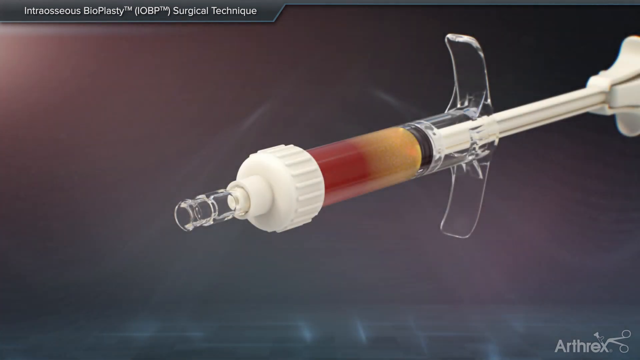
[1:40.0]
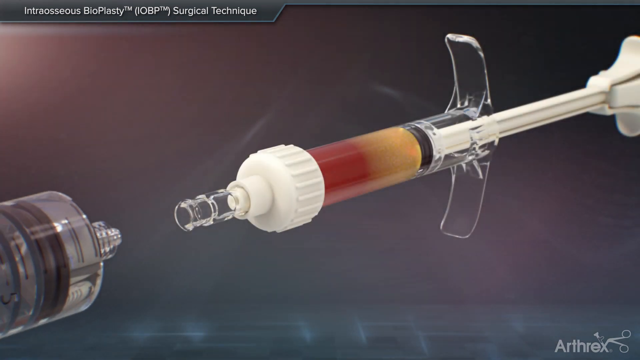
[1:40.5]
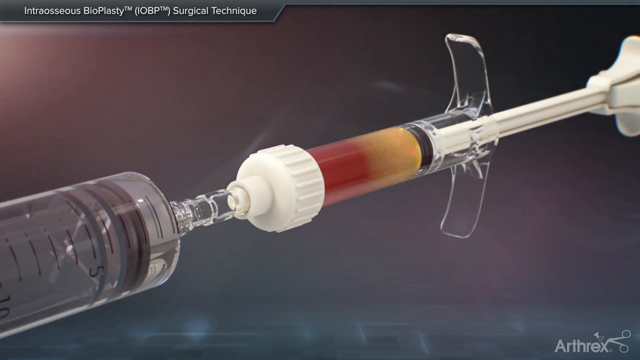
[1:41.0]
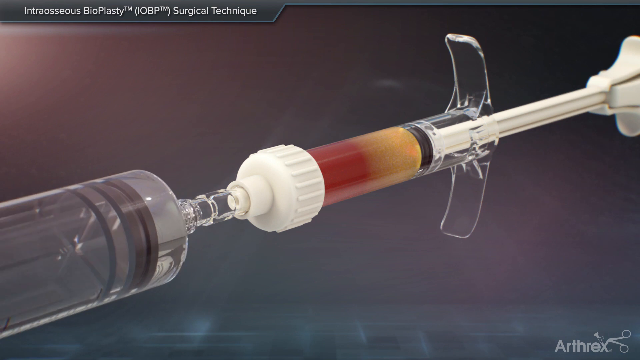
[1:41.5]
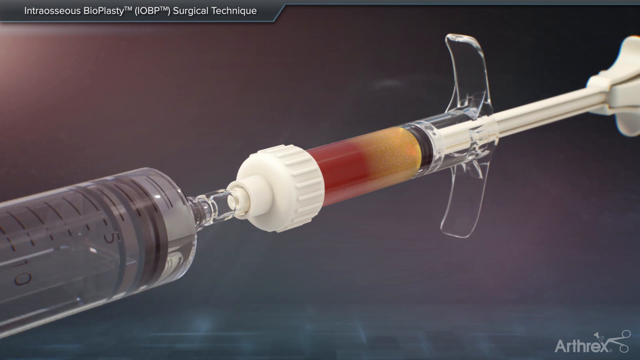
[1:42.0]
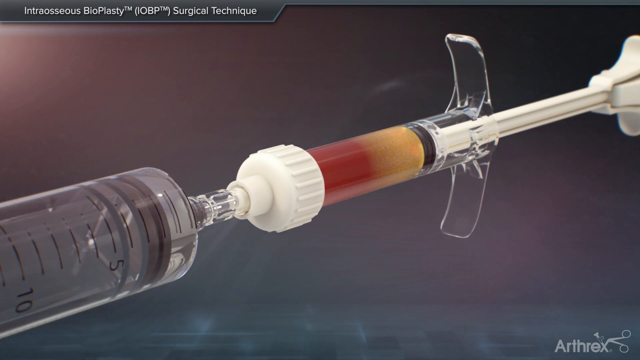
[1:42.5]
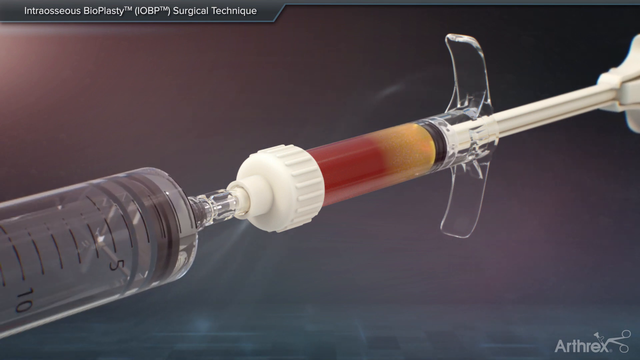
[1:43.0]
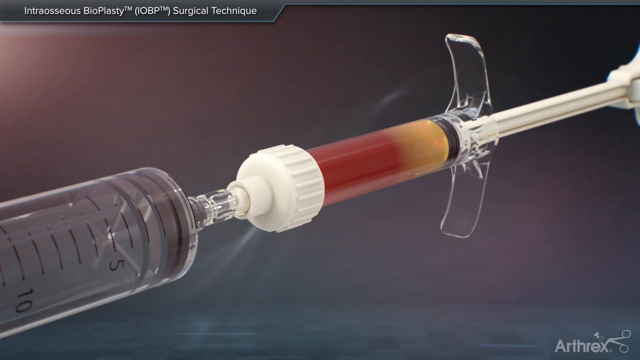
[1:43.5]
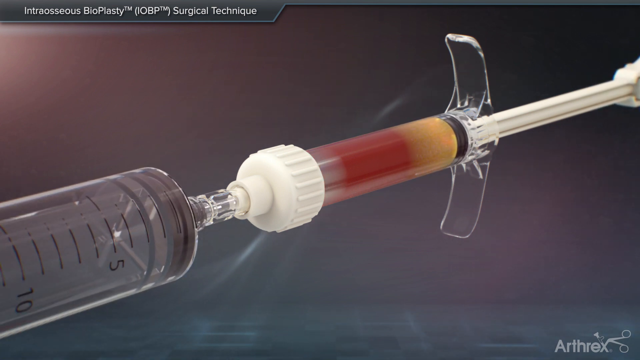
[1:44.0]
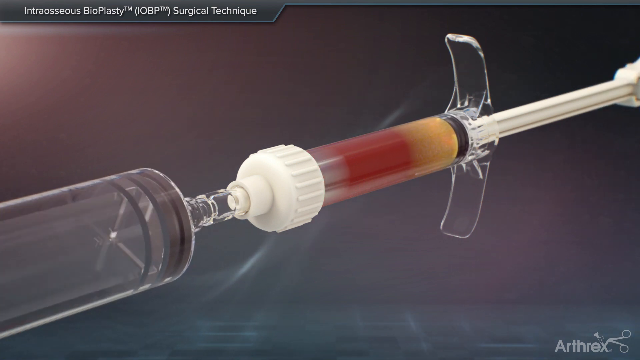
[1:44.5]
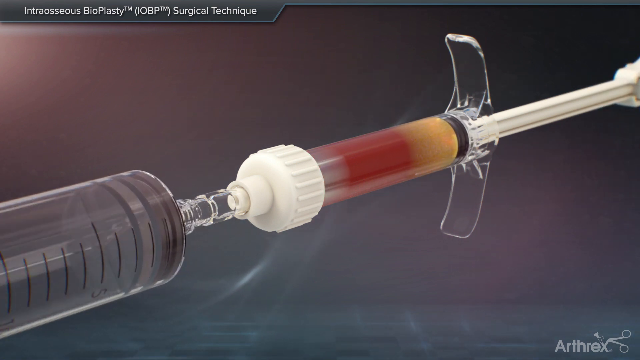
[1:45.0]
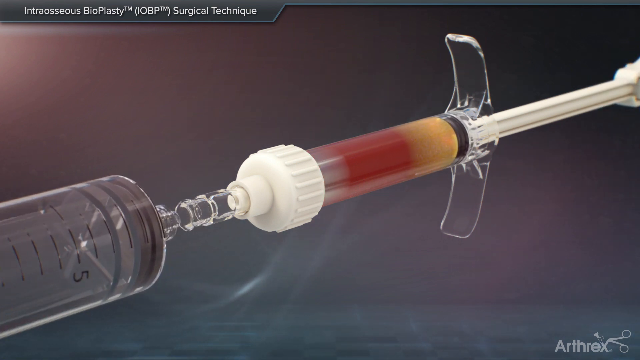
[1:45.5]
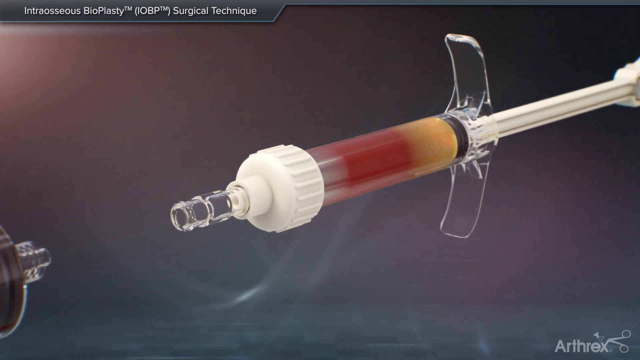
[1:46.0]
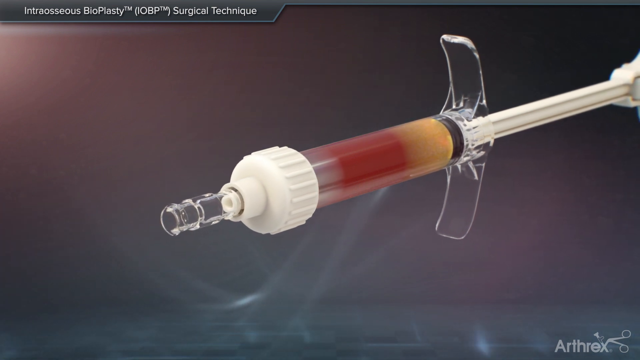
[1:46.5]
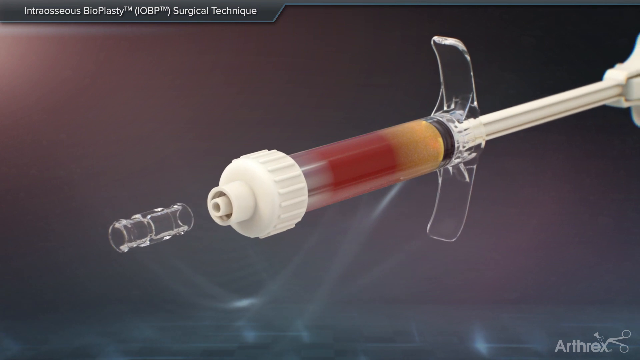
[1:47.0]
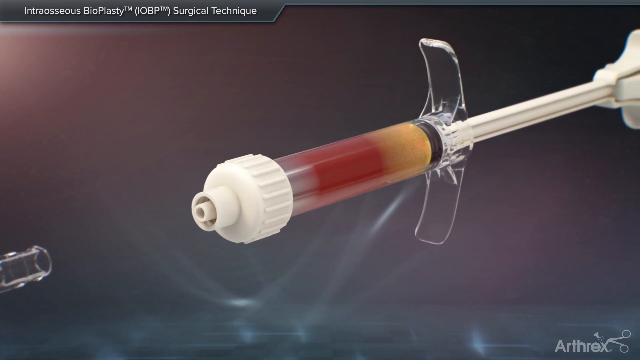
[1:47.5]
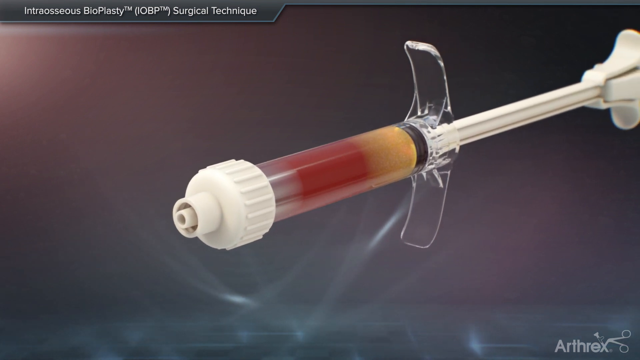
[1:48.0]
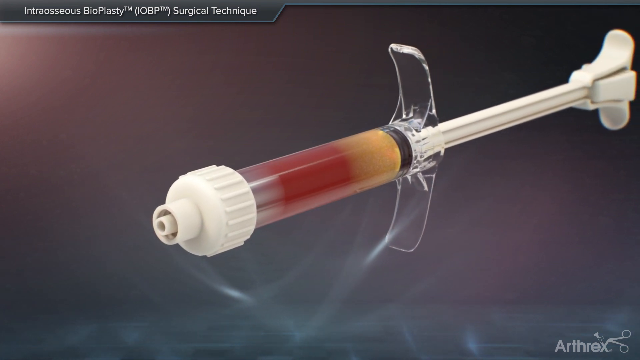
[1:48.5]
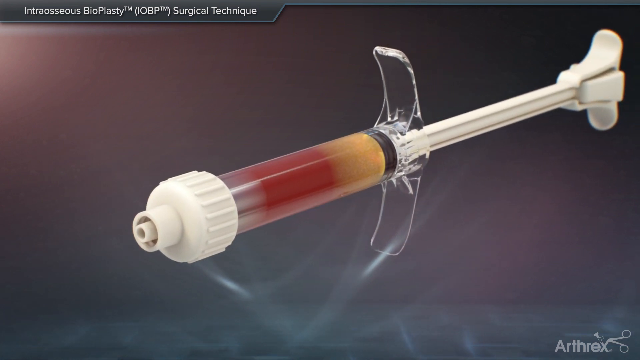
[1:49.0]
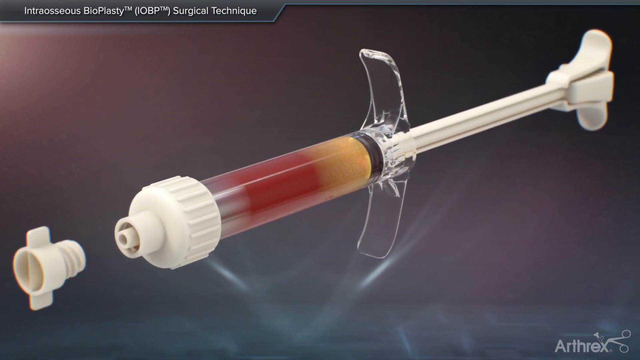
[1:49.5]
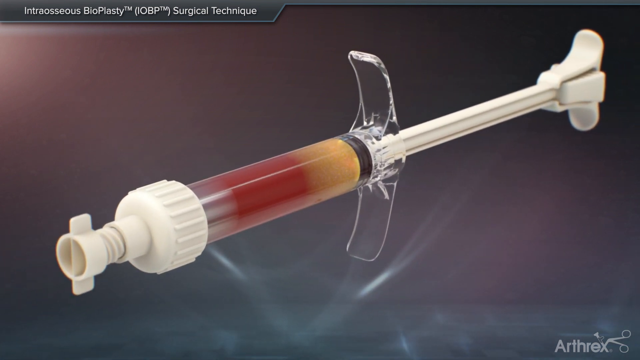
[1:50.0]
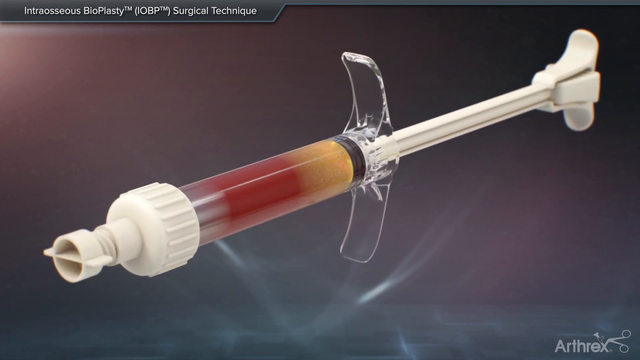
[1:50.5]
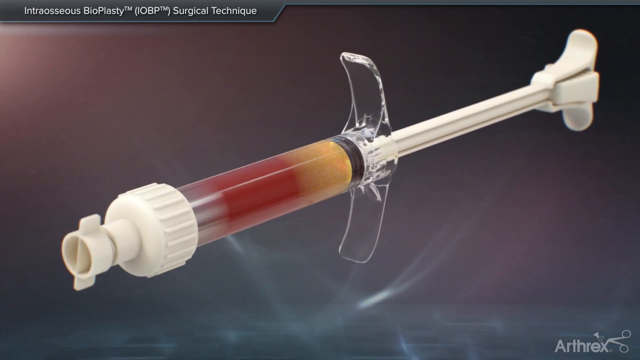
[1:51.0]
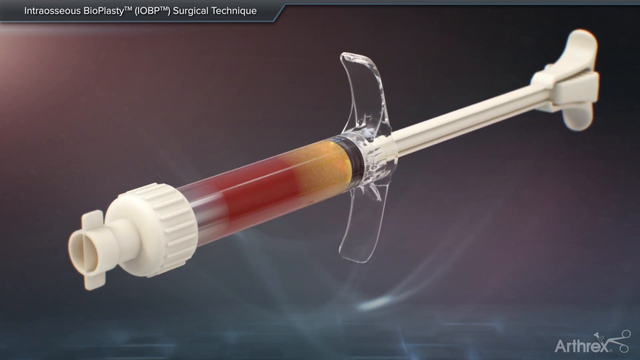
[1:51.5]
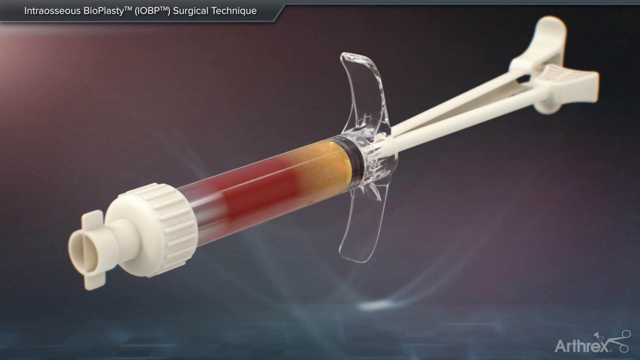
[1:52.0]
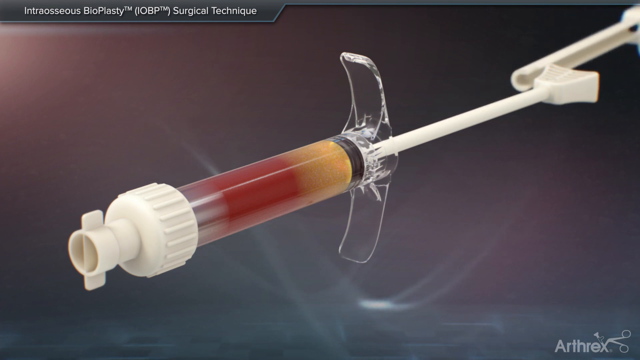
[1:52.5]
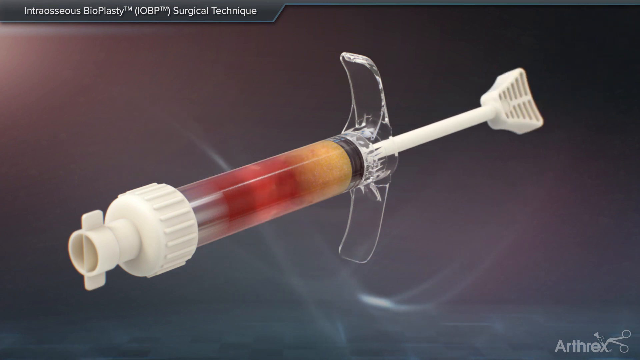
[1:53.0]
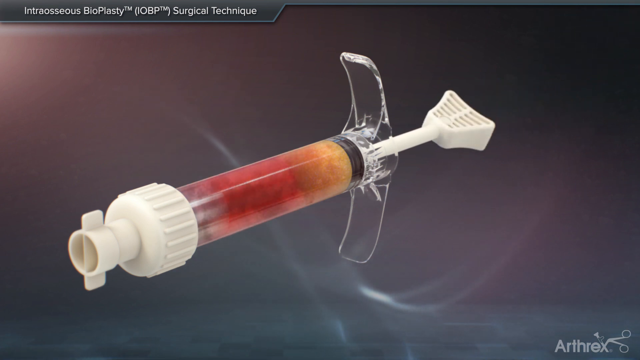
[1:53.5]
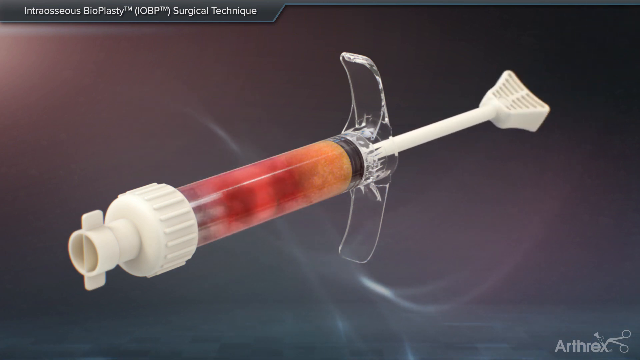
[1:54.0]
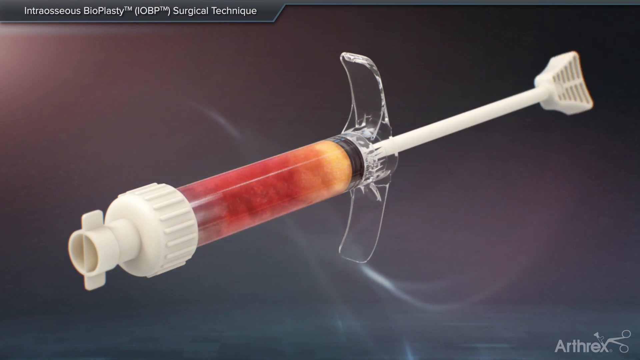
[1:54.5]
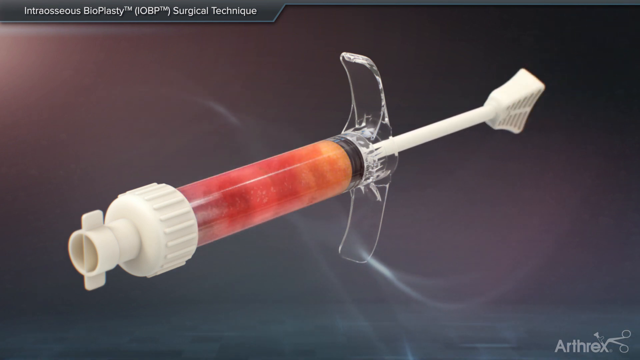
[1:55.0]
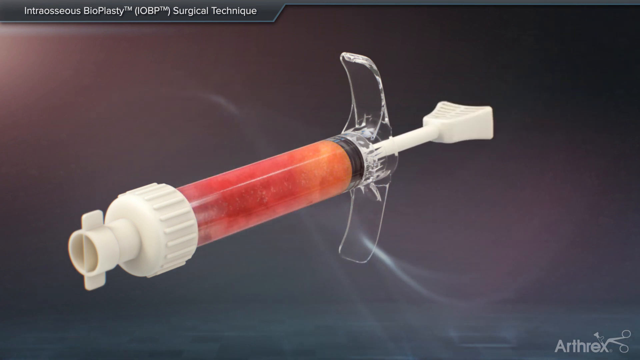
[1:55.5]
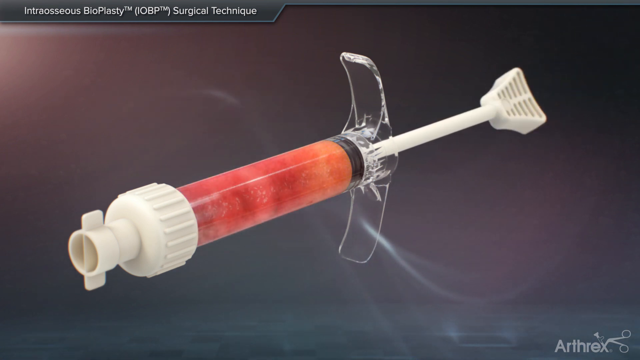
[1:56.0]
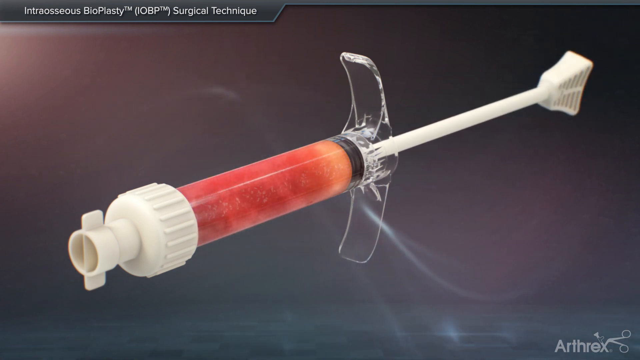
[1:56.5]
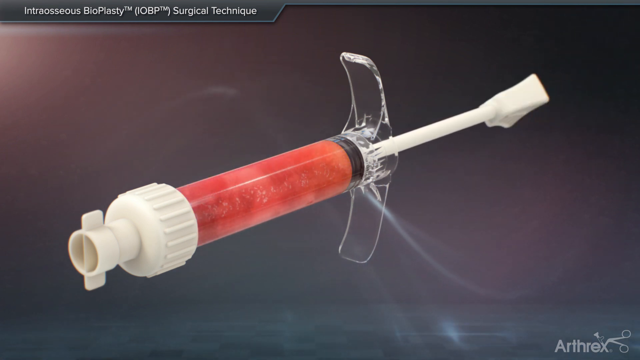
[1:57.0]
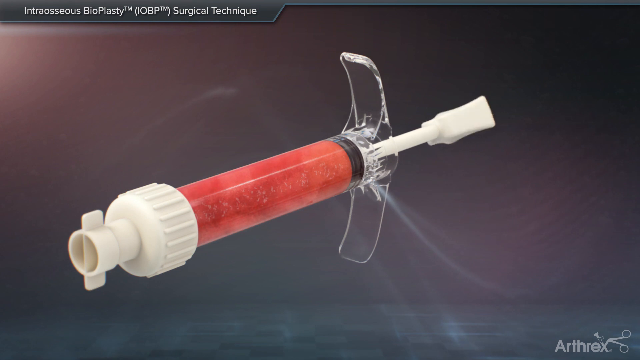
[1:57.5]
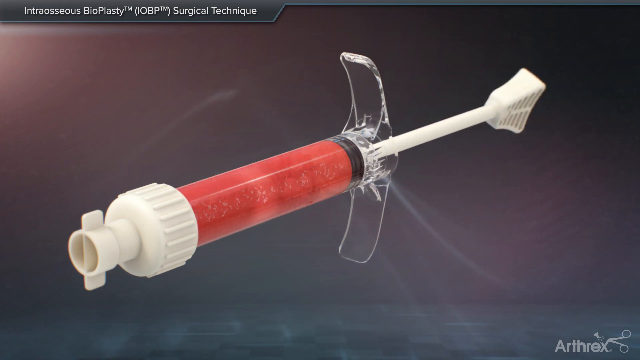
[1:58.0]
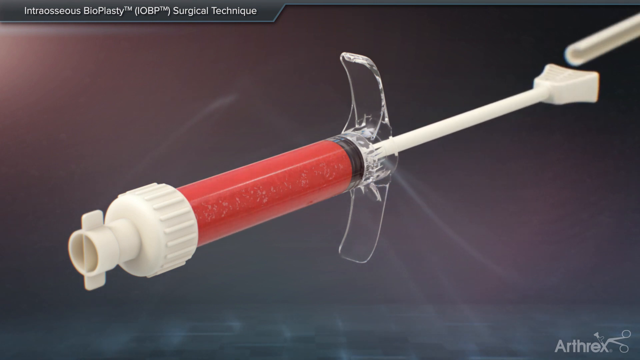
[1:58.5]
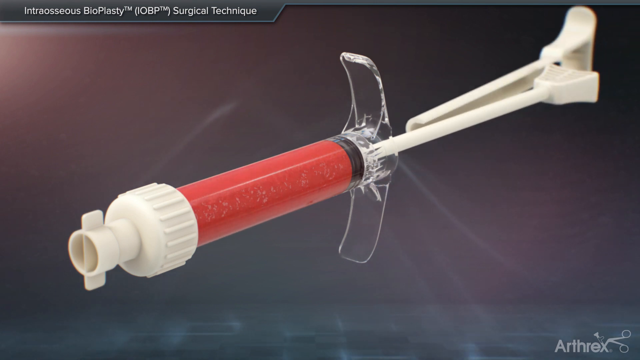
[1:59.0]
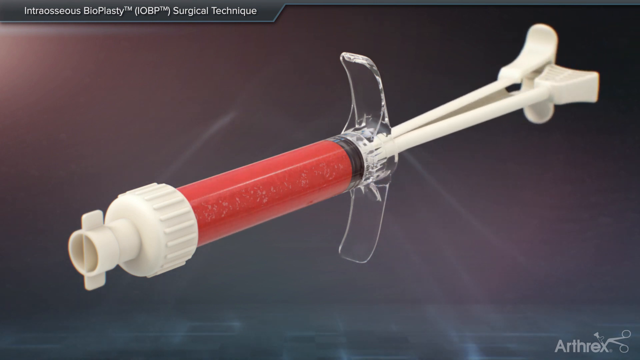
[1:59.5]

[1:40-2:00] Another syringe, presumably containing the medication, has its contents pulled into the second cylinder, which looks different from a regular syringe: it looks like hard plastic, with a white cap, two clear plastic handles on either side, and a white plunger inside. The syringe now contains the yellowish orange liquid at the top, the red liquid, presumably blood, and the medication. The plunger is depressed three times to mix the three fluids together.